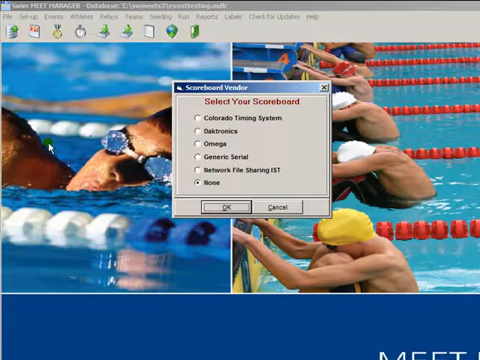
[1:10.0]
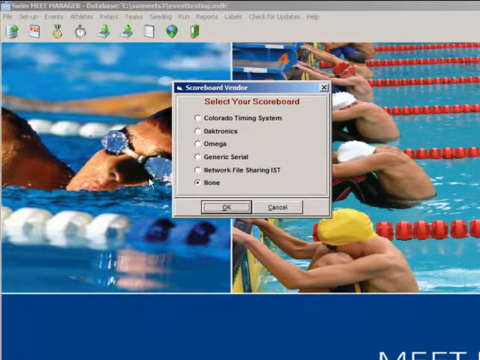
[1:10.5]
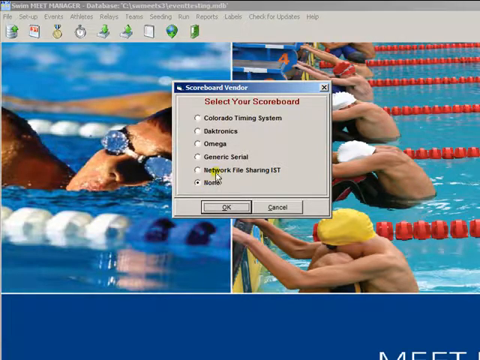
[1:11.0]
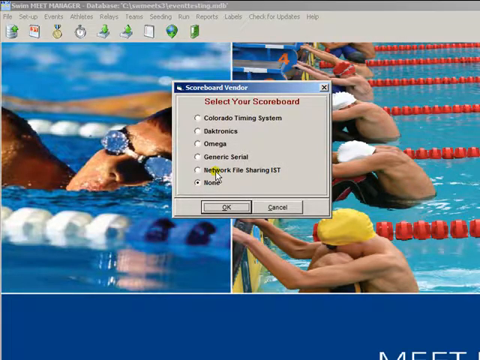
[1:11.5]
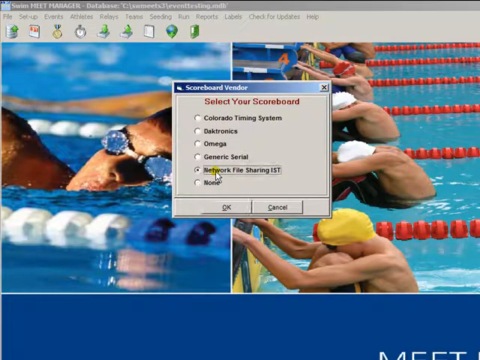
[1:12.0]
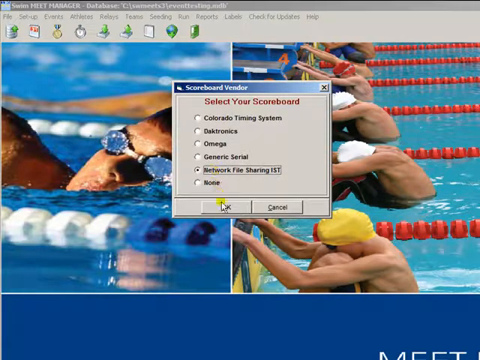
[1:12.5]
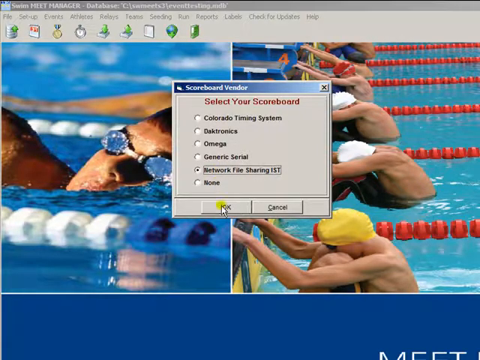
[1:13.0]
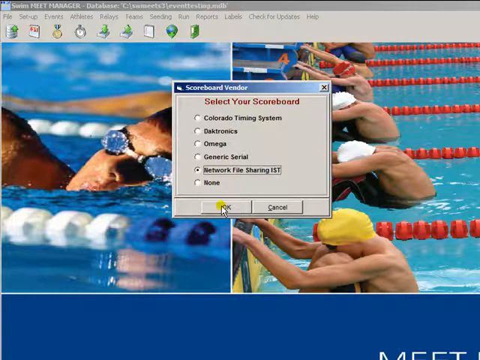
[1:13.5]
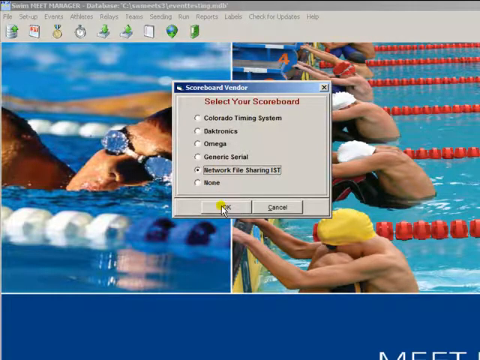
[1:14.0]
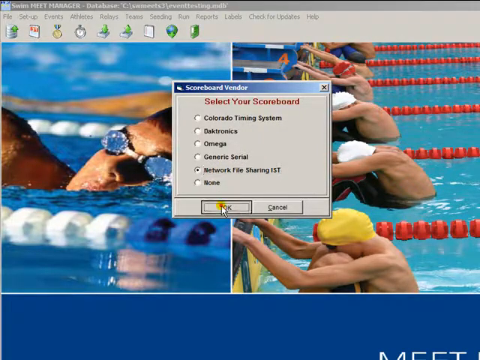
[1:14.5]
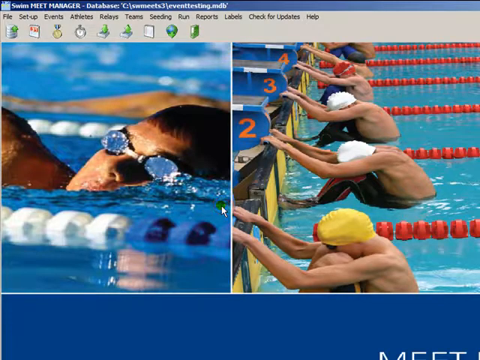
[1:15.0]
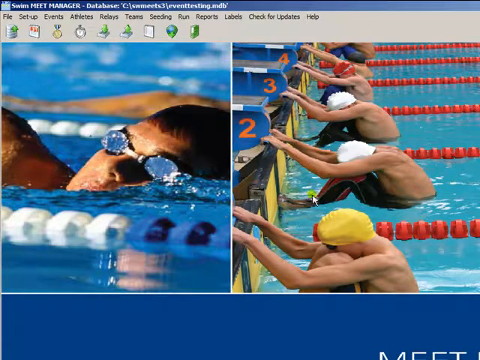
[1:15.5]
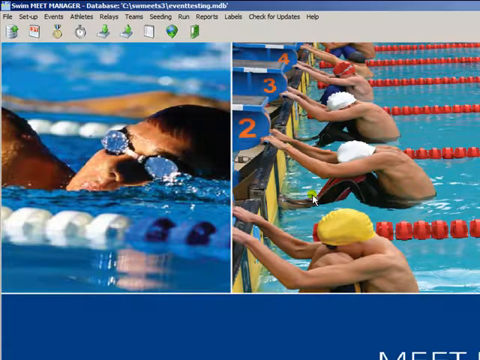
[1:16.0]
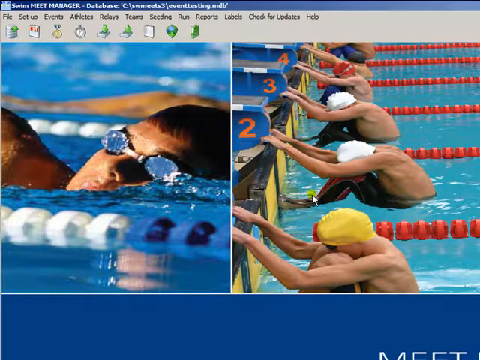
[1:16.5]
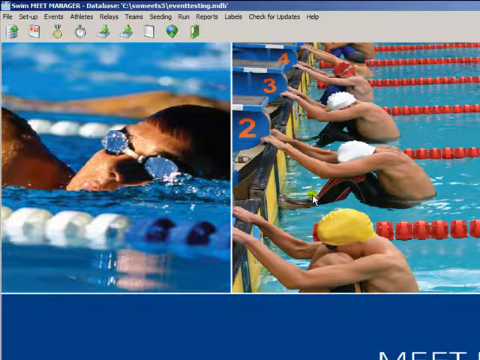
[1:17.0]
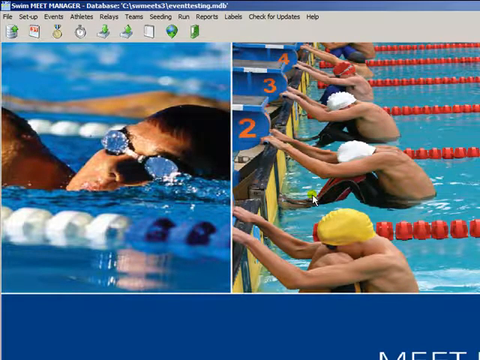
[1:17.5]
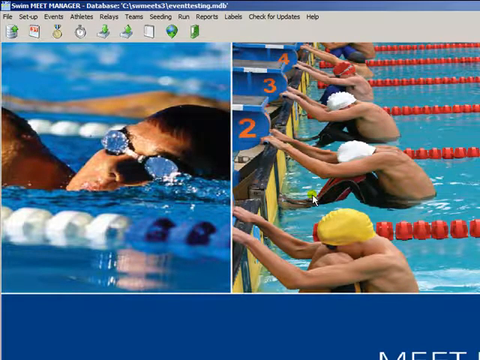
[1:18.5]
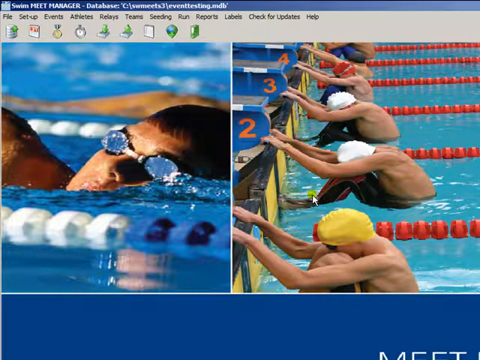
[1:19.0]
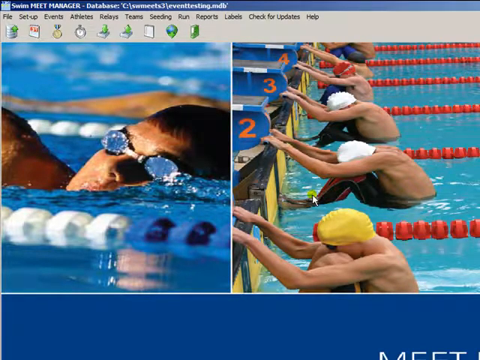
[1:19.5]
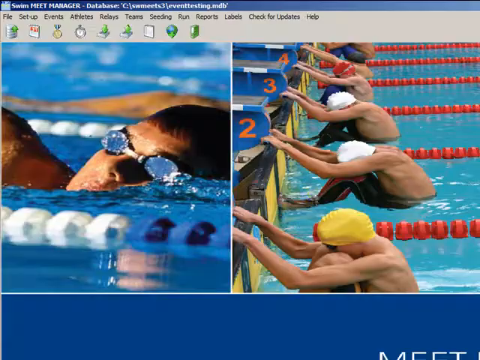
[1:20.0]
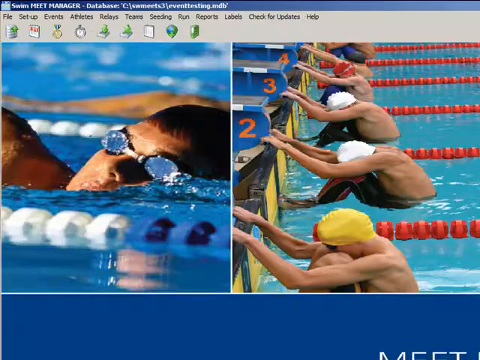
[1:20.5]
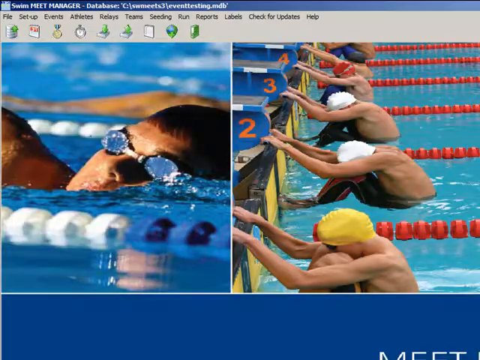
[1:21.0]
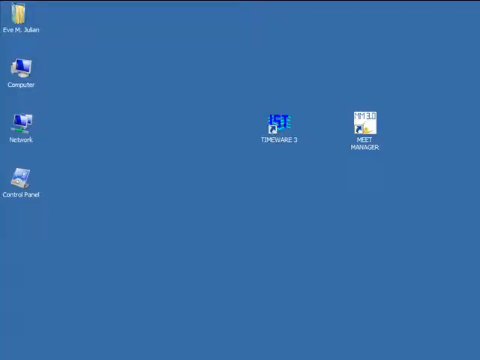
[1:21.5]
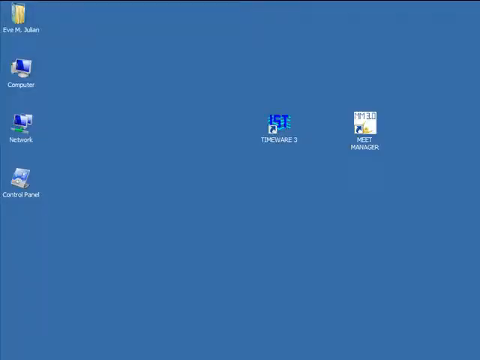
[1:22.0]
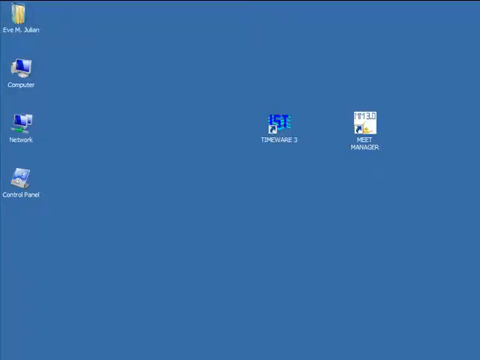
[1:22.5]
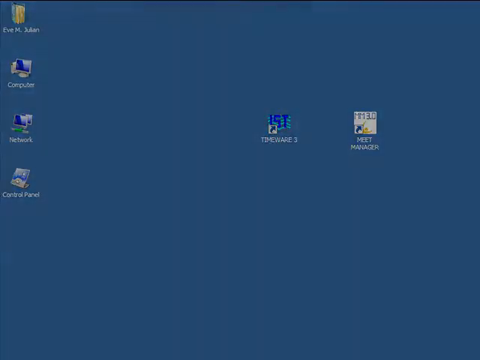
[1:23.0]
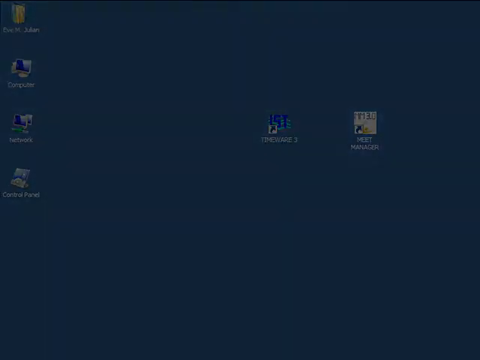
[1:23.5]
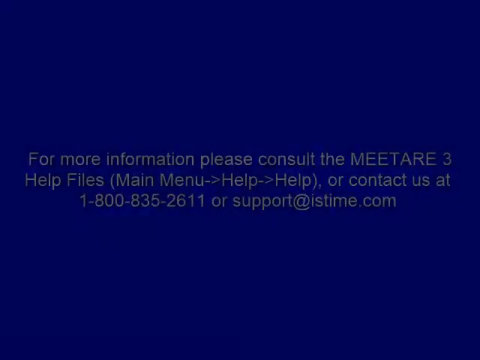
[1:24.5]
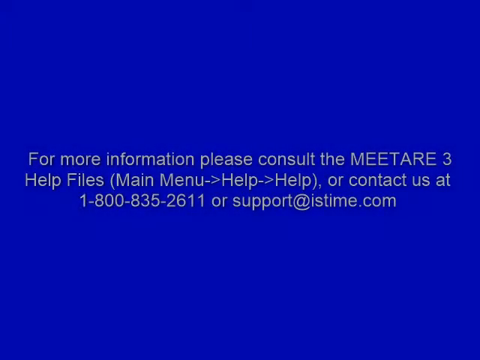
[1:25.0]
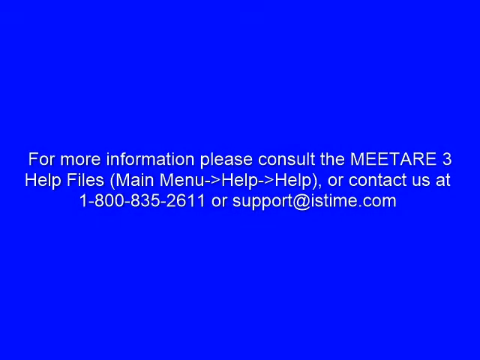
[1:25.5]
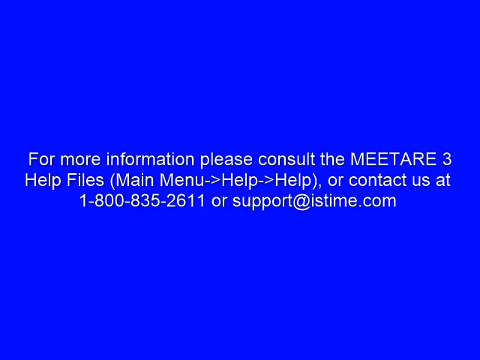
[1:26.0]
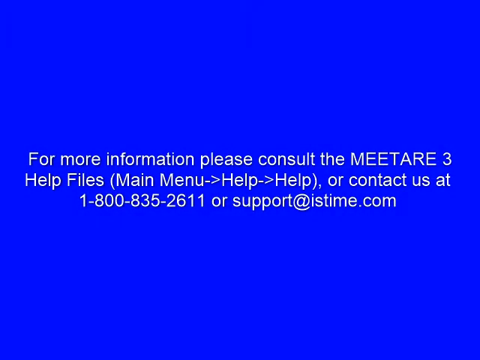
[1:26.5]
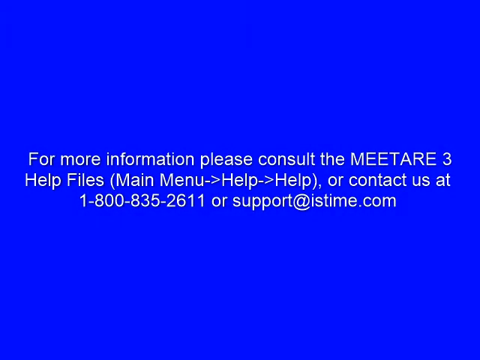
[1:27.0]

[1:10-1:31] The scoreboard vendor menu is visible, with the options "Colorado Timing System", "Daktronic", "Omega", "Generic Serial", "Network File Sharing IST" and "None". The demonstrator selects Network File Sharing IST, then selects the OK button, and the menu closes. The software's background of swim meet images and its main menu options are visible. The application then closes, revealing the demonstrator's desktop. The video fades to an information screen with a blue background and white type that says "for more information please consult the MeetAre 3 help files, (main menu, help, help) or contact us at 1-800-835-2611 or support@istime.com." This appears to be the end of the software demonstration. The software appears somewhat dated and not modern.